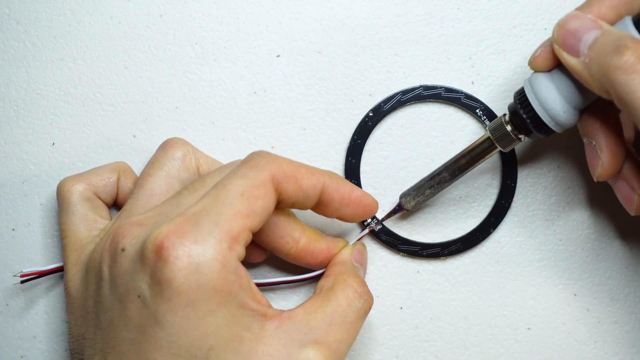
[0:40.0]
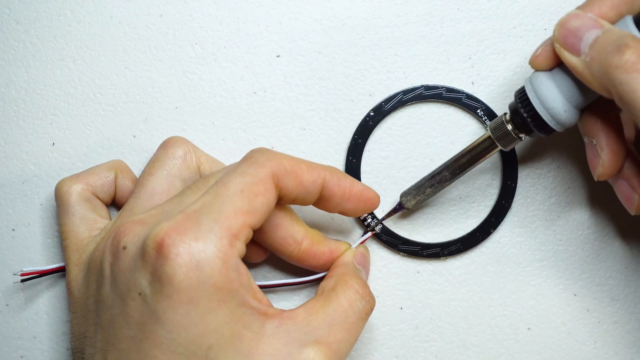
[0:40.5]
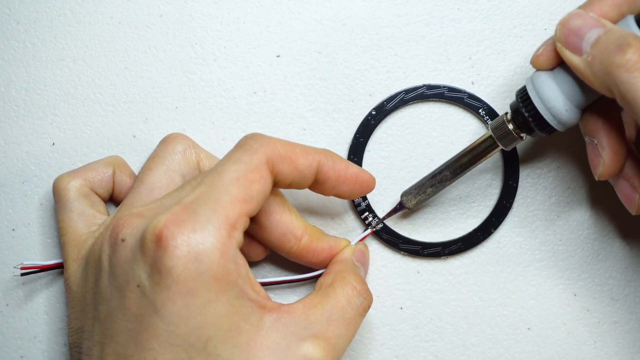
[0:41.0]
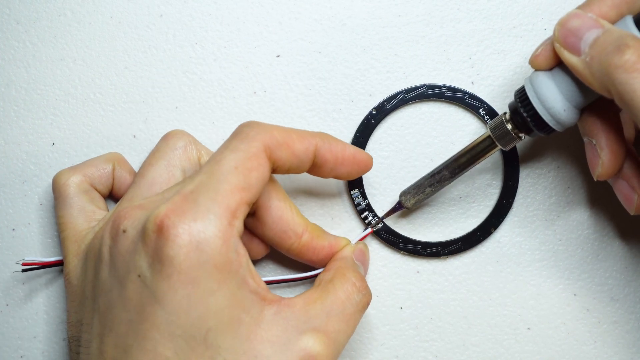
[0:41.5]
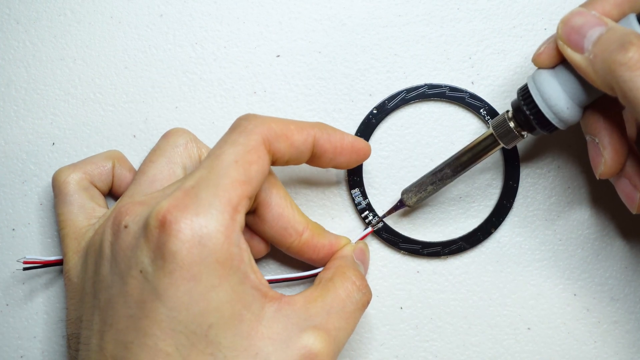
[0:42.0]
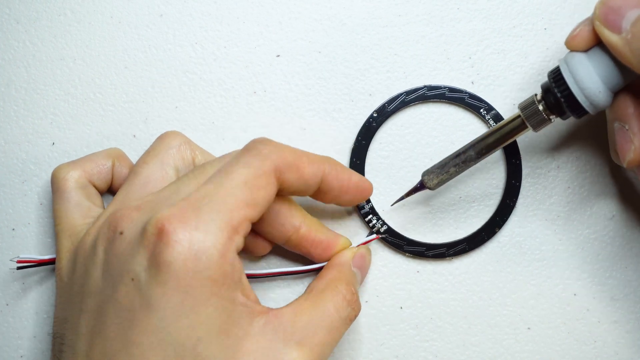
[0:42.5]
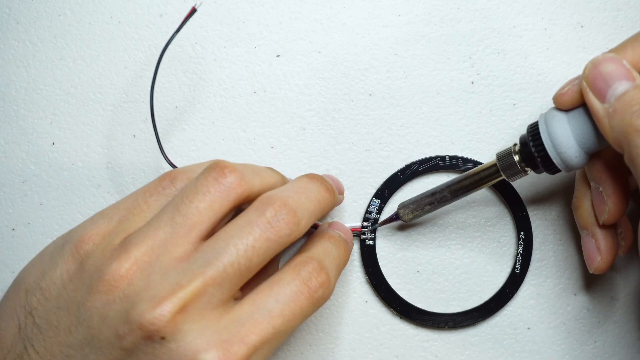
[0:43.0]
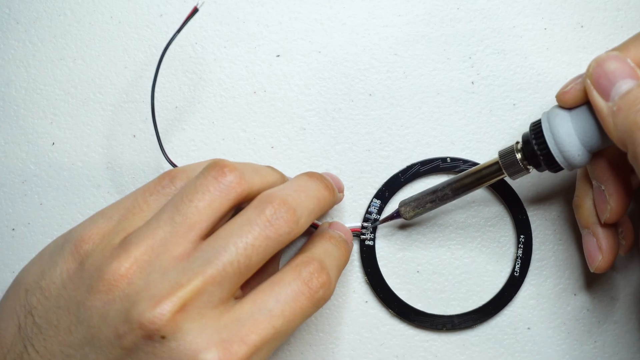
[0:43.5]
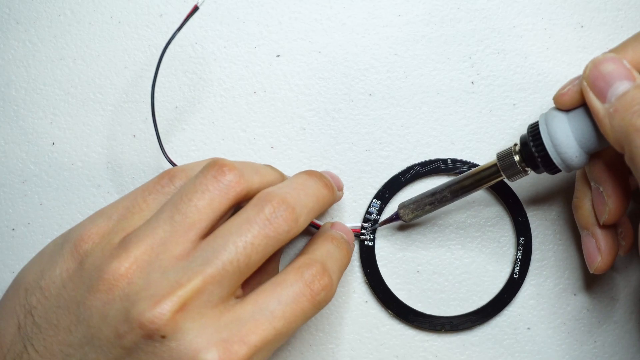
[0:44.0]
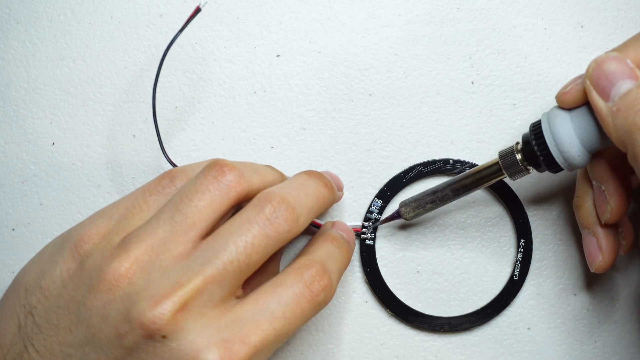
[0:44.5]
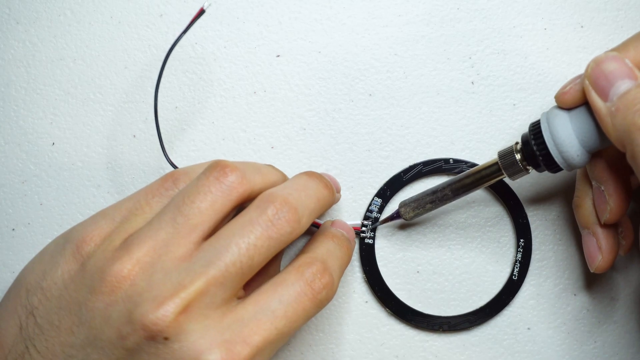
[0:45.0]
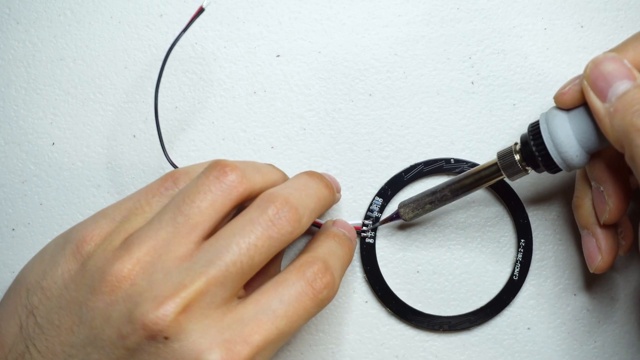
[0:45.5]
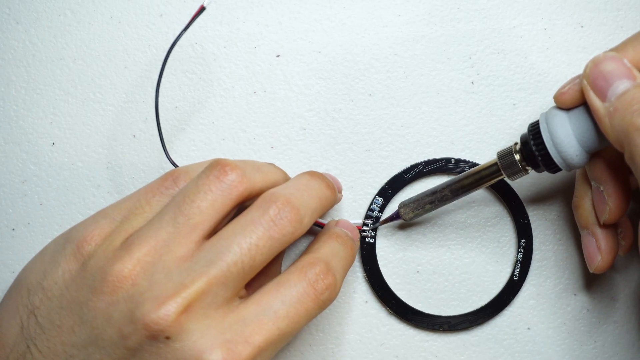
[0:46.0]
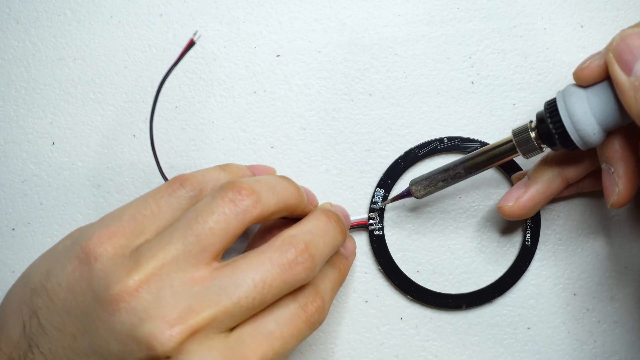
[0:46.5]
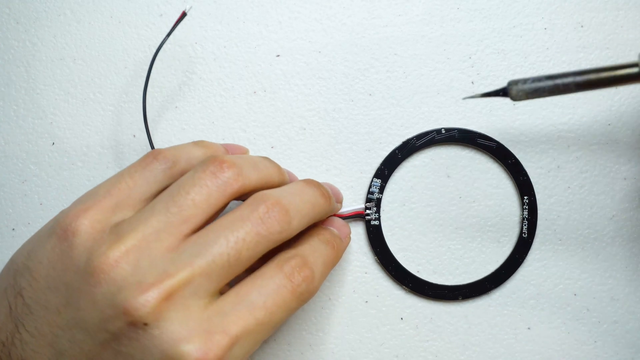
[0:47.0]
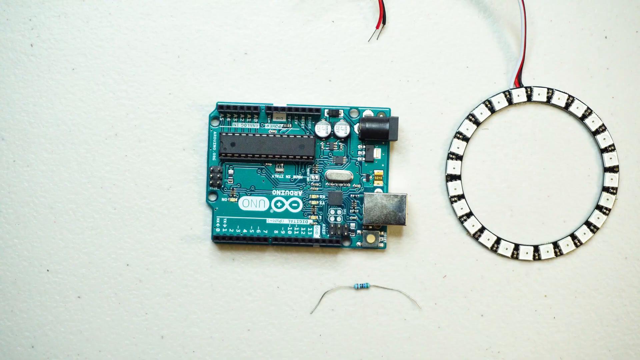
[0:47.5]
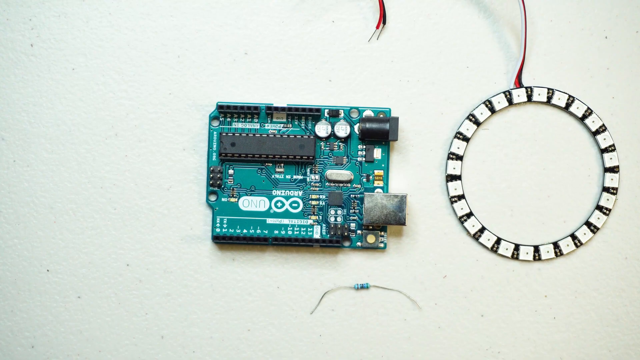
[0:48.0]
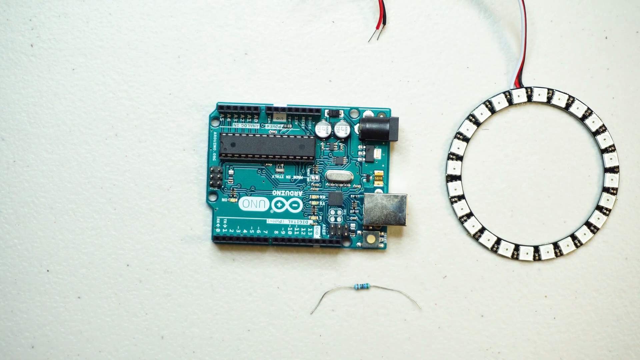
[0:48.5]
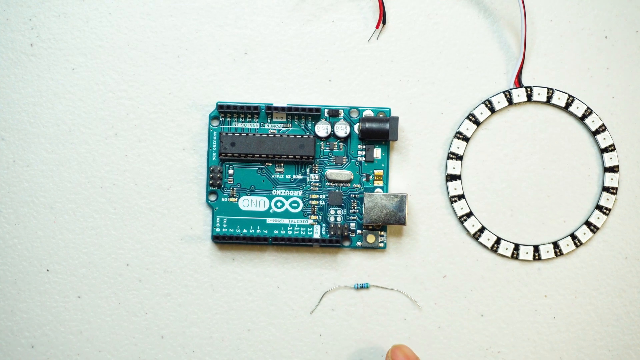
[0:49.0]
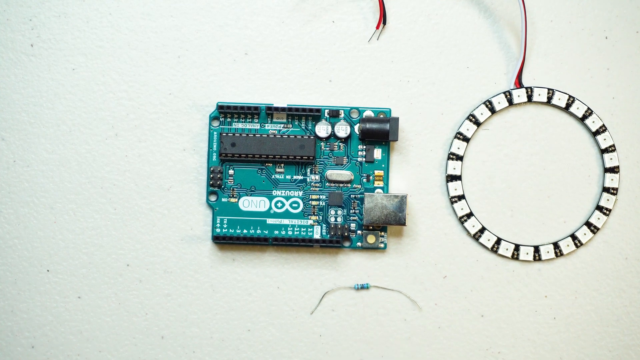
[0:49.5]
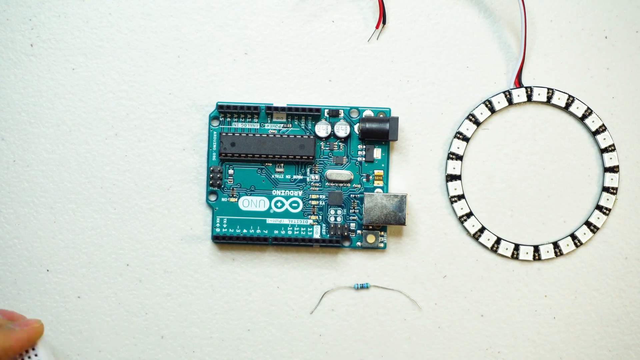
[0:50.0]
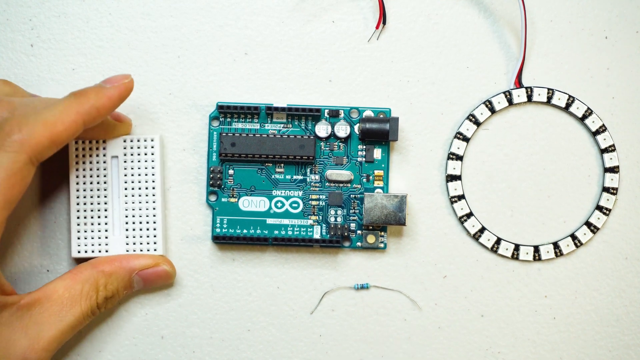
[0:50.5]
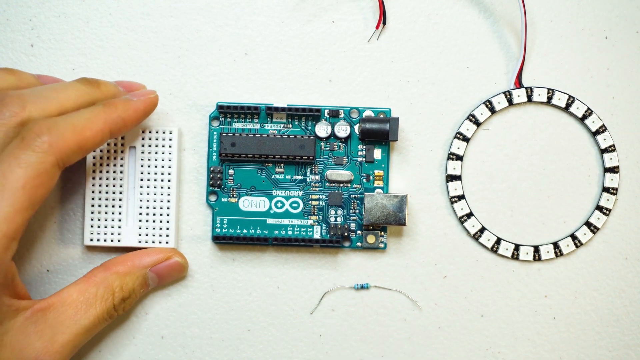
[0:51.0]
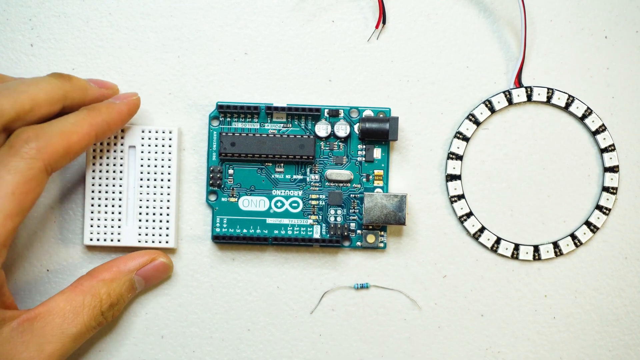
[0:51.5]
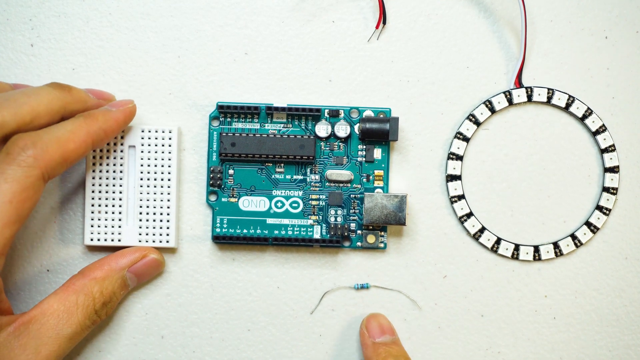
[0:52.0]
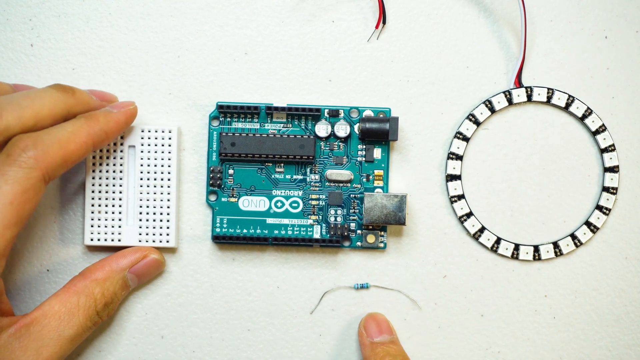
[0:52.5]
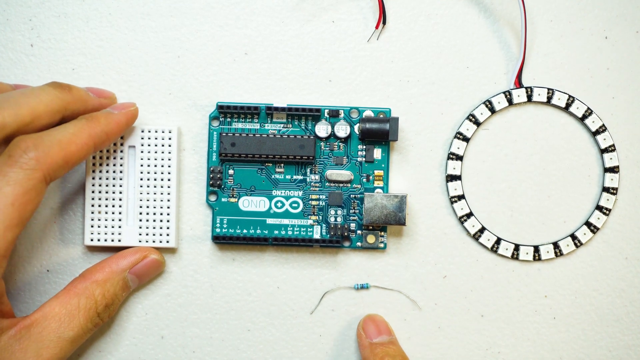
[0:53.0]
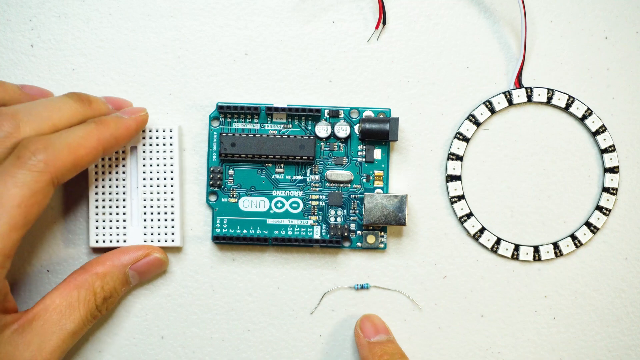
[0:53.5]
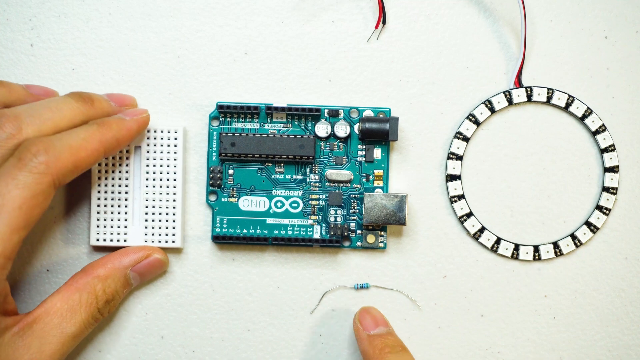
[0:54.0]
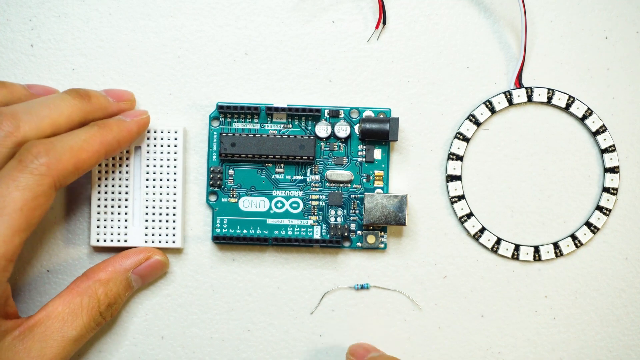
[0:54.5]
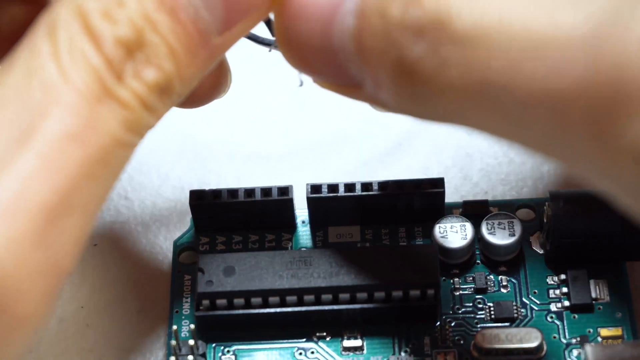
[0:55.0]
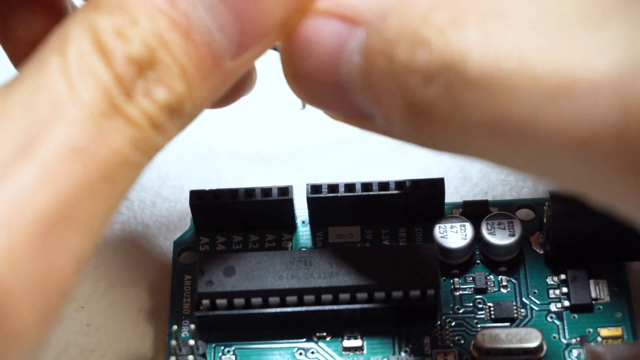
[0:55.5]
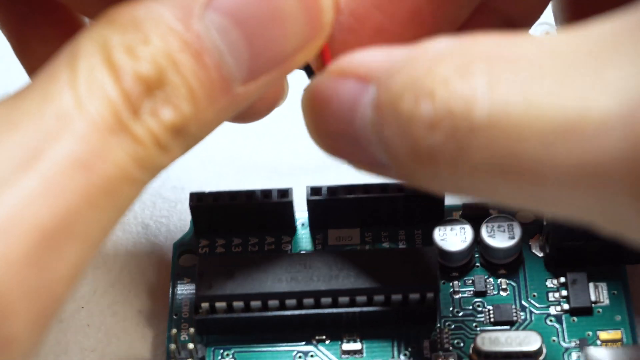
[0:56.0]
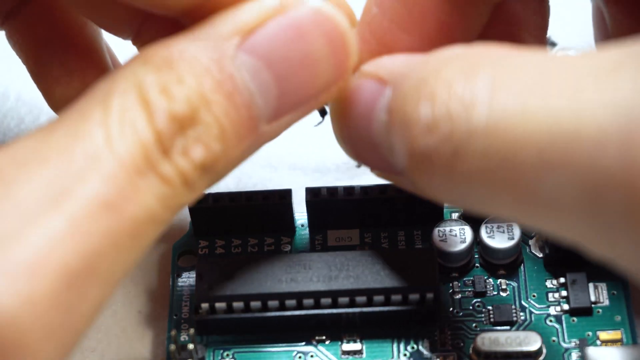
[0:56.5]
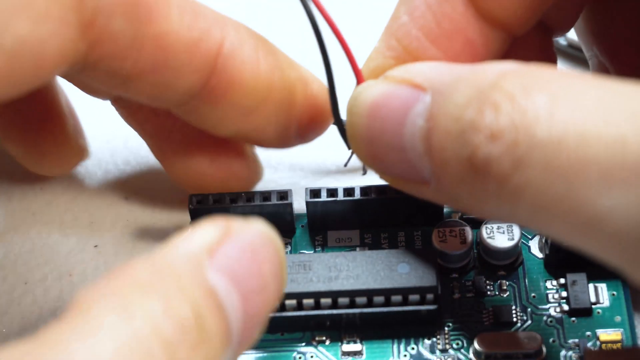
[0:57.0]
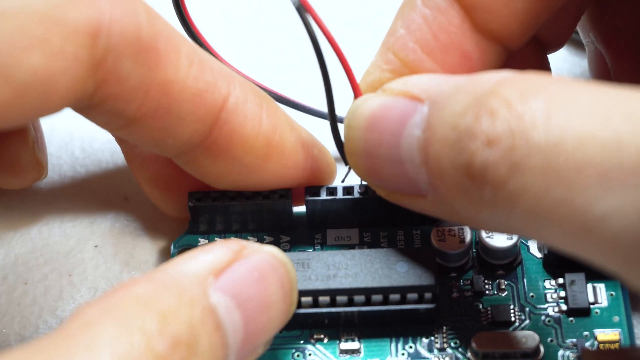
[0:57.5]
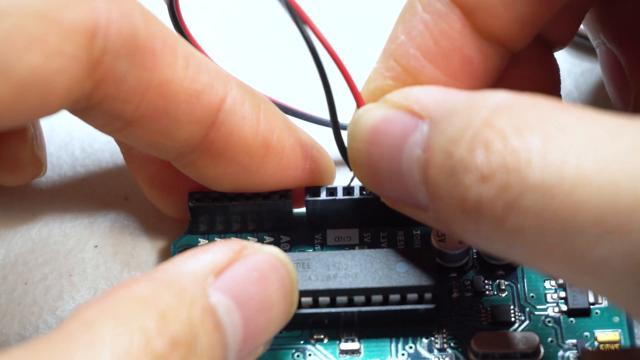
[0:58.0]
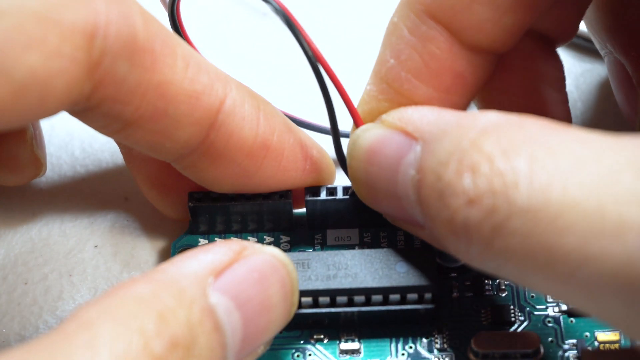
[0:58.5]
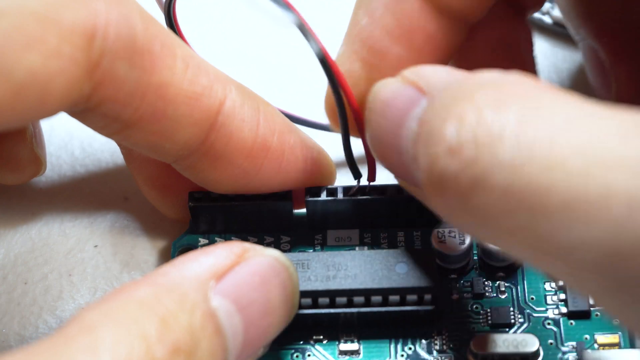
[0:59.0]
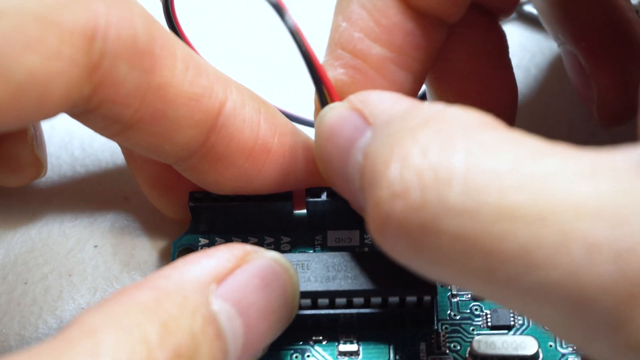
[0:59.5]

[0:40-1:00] In a first-person close-up, someone uses both hands to work on changing or fixing a circuit of the circular machine. Their hands are white and they are on a white surface. The object is circular, about half the size of the hand, with a black back. They use a tube-like, needle-like device to change the wire attached to the circular device, using very fine movements. Another first-person view, taken later, shows them working on the machine with the same tool, and they take their right hand off the machine. A photo follows of a circuit board in the middle of the screen on a white surface, with the circular machine to its right, front side up, showing its alternating white and black pattern. A hand appears at the left displaying a white rectangular object with black holes in the middle. A close-up then shows two hands attaching red and green wires to the circuit.